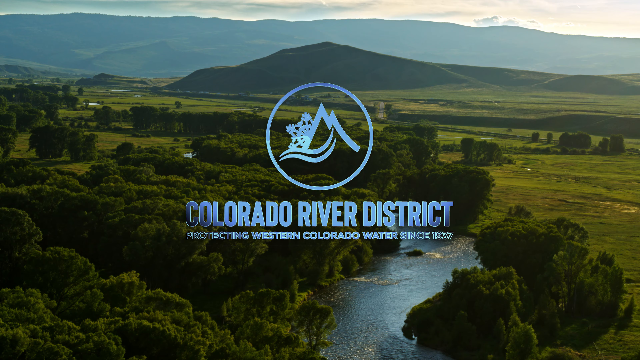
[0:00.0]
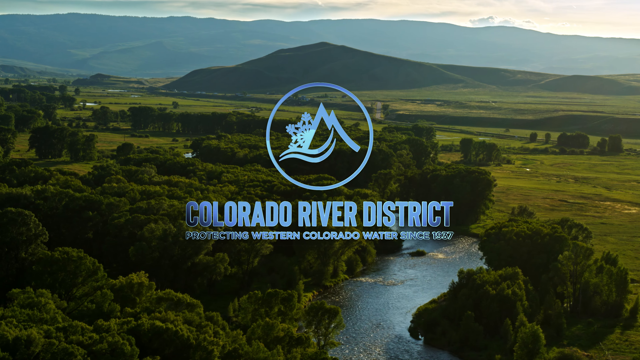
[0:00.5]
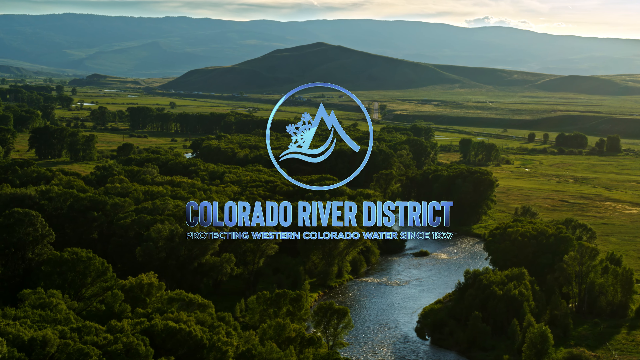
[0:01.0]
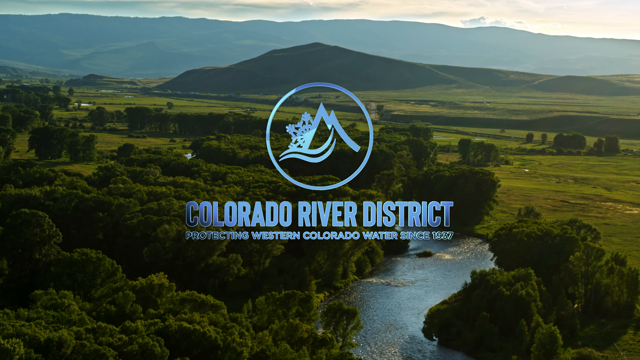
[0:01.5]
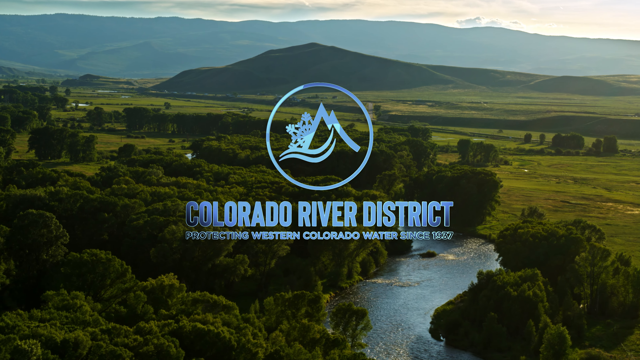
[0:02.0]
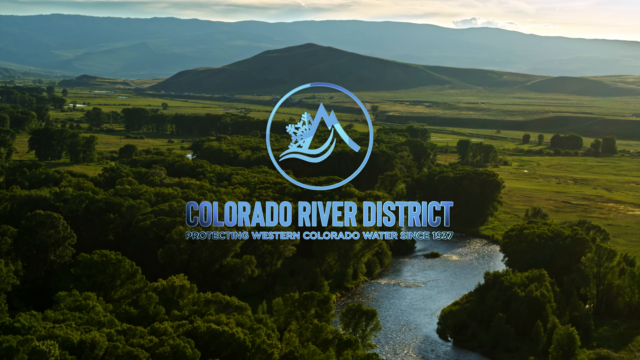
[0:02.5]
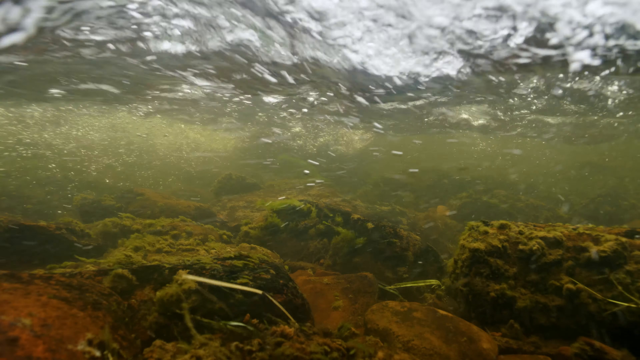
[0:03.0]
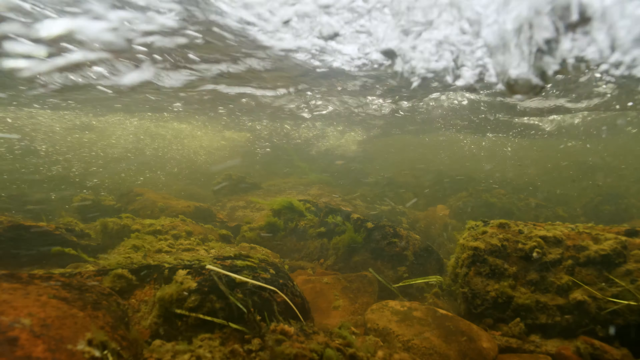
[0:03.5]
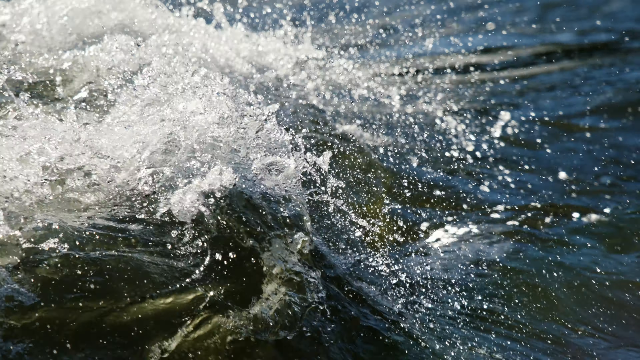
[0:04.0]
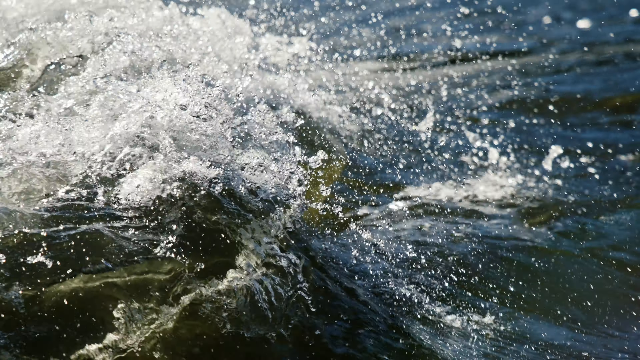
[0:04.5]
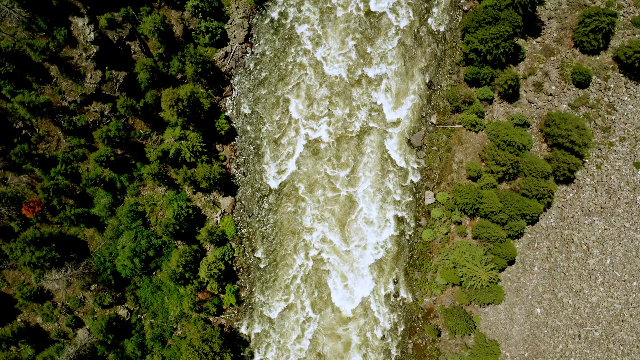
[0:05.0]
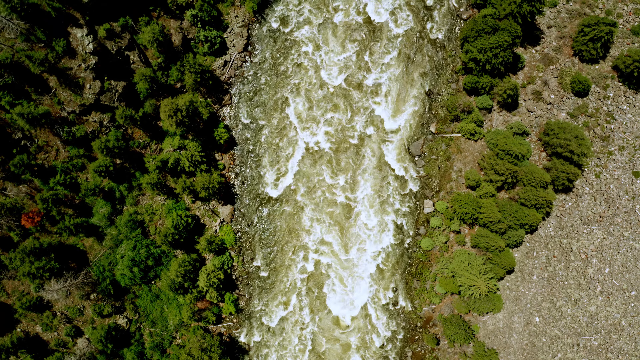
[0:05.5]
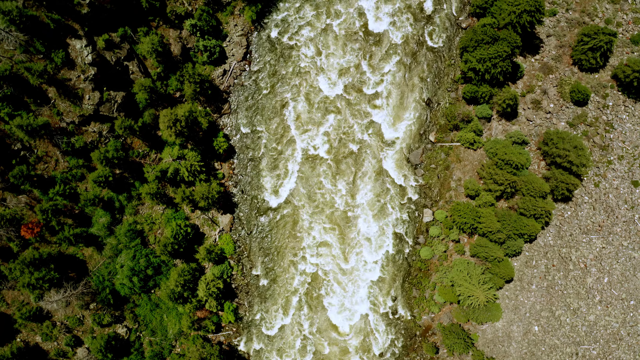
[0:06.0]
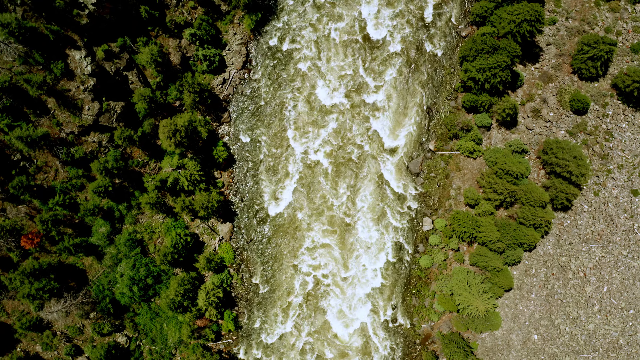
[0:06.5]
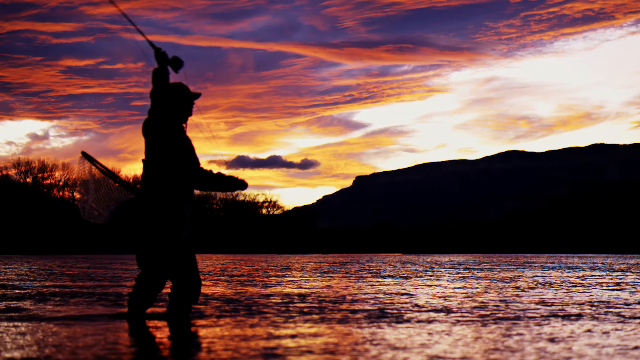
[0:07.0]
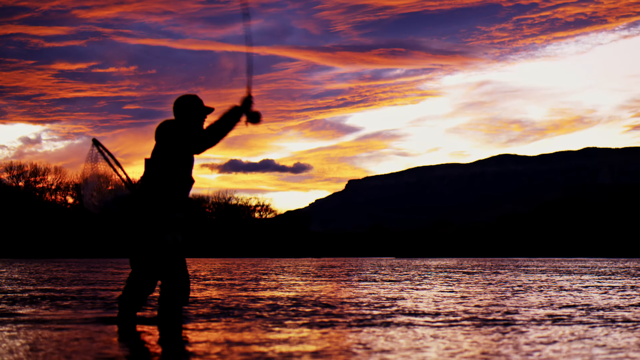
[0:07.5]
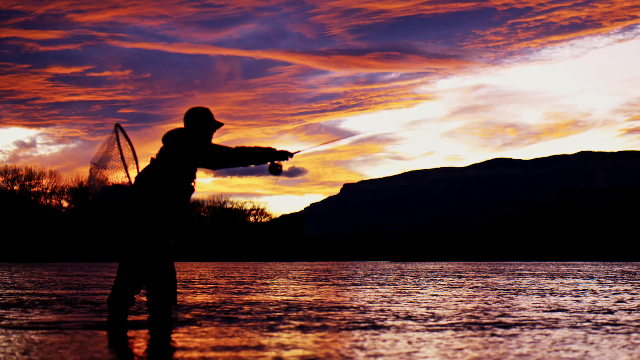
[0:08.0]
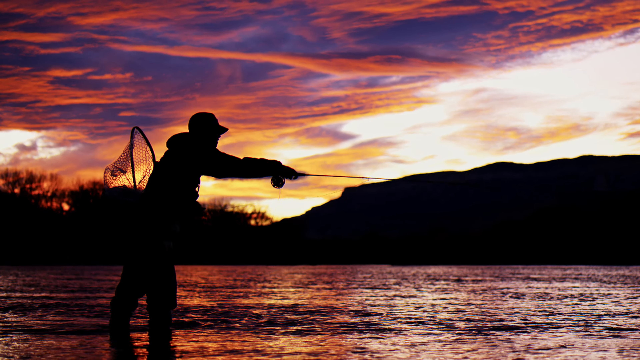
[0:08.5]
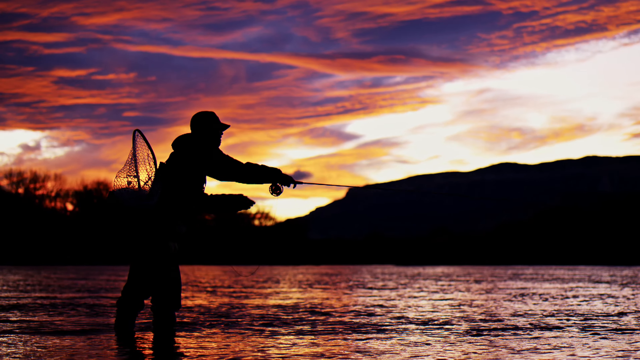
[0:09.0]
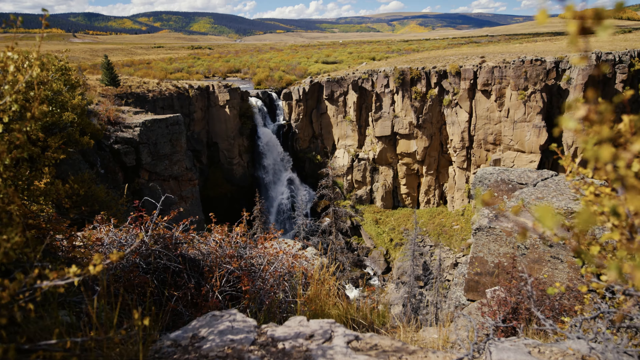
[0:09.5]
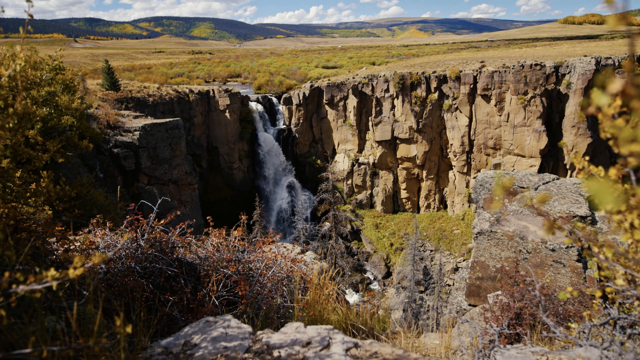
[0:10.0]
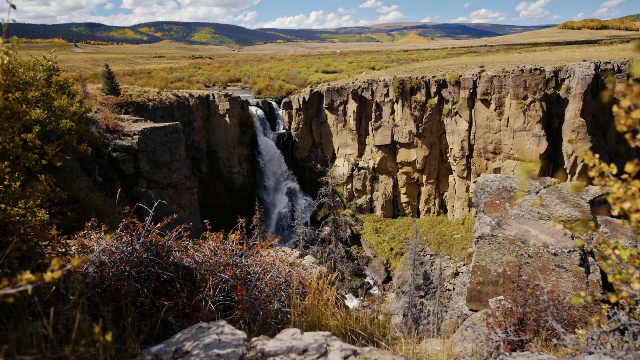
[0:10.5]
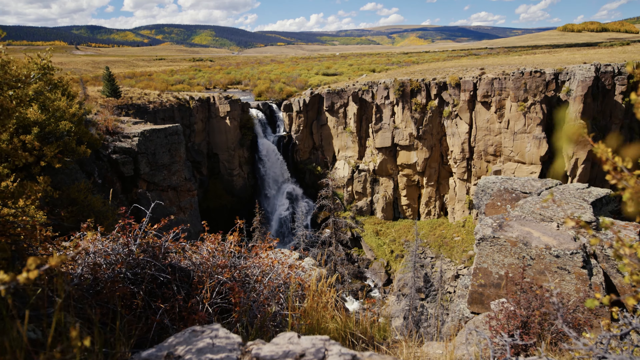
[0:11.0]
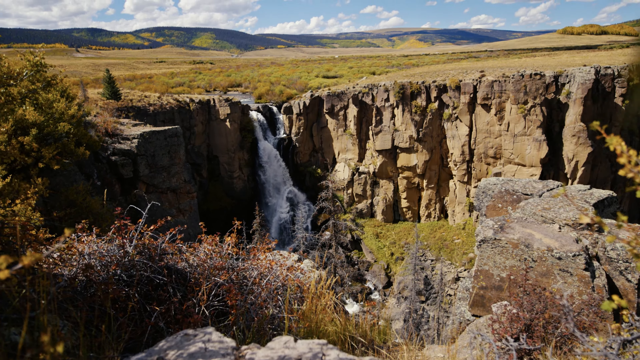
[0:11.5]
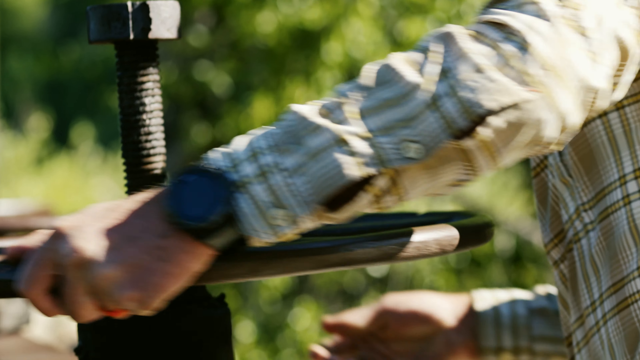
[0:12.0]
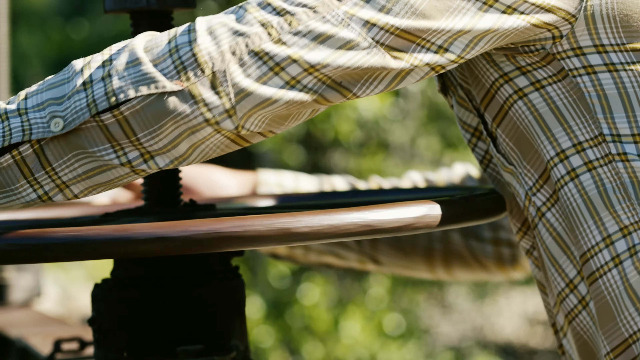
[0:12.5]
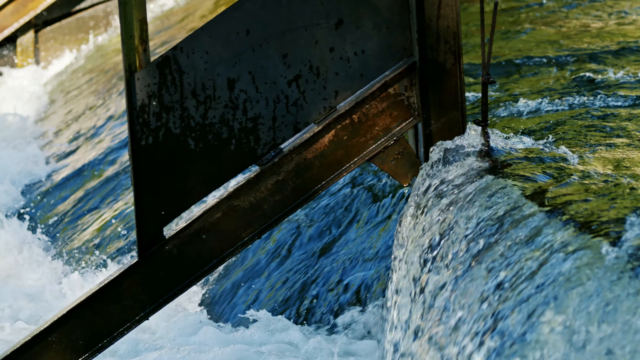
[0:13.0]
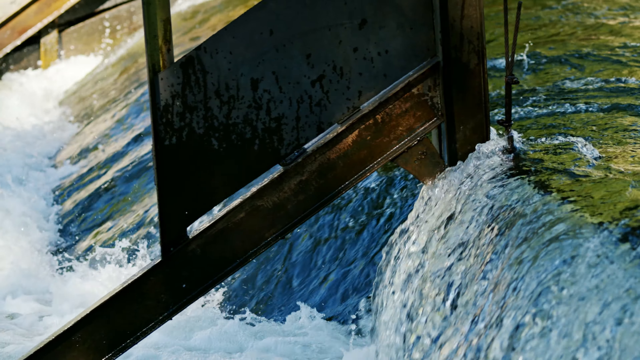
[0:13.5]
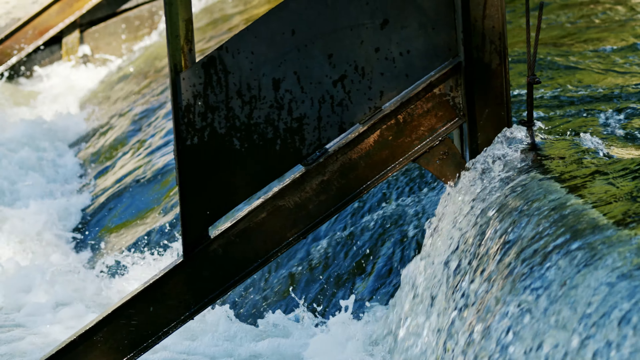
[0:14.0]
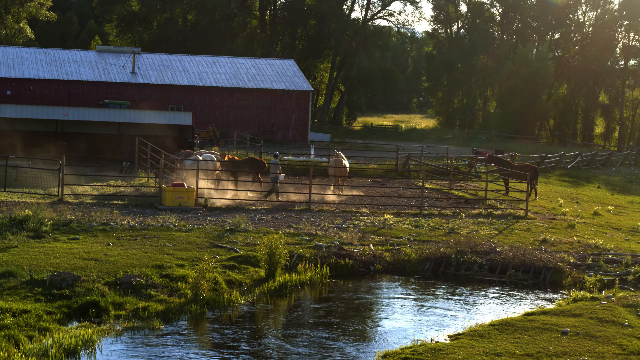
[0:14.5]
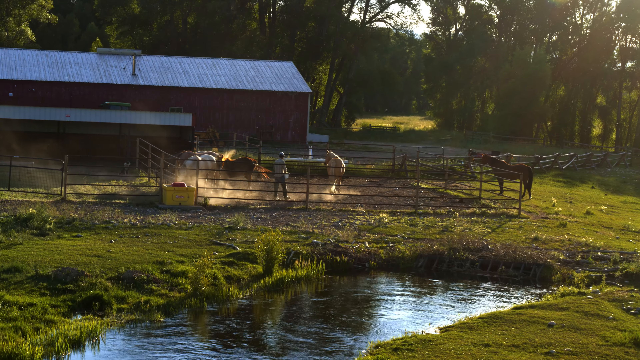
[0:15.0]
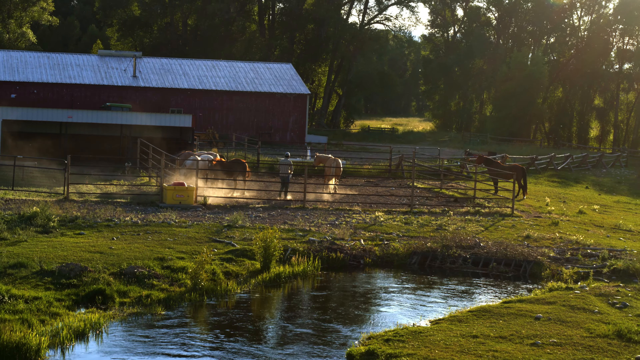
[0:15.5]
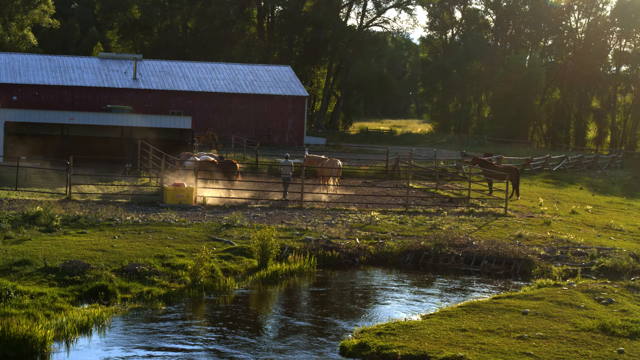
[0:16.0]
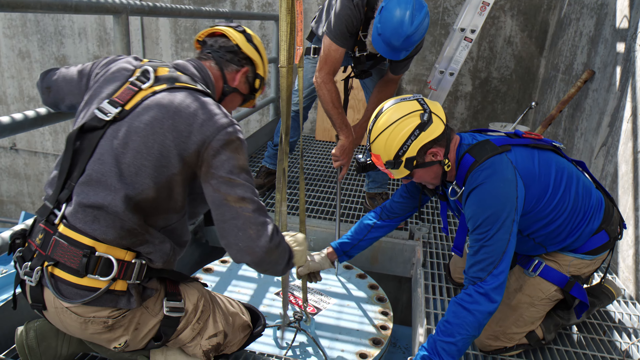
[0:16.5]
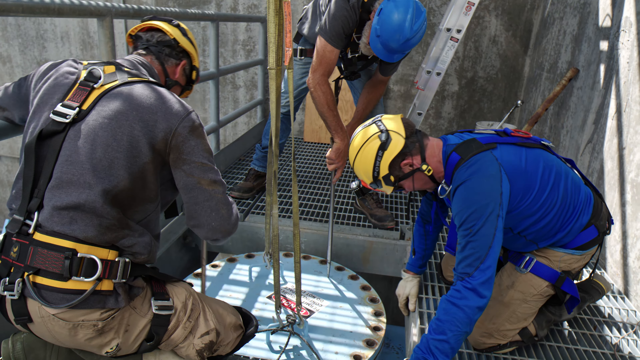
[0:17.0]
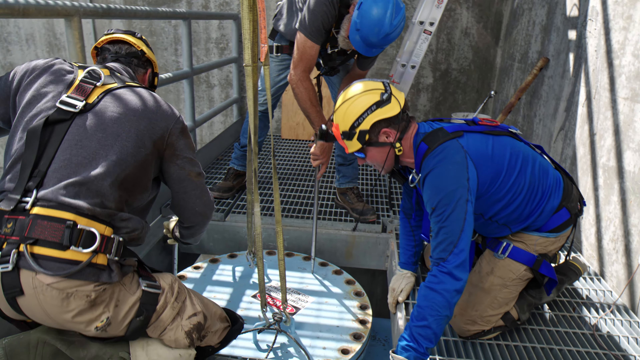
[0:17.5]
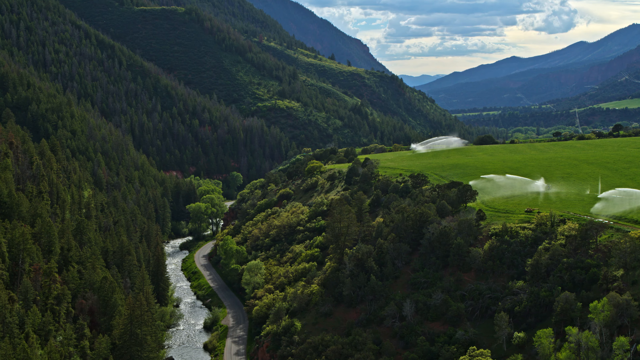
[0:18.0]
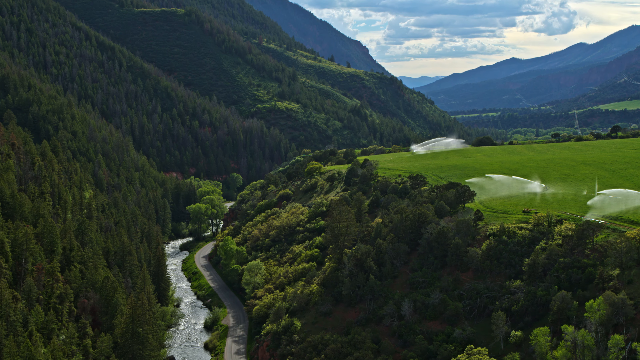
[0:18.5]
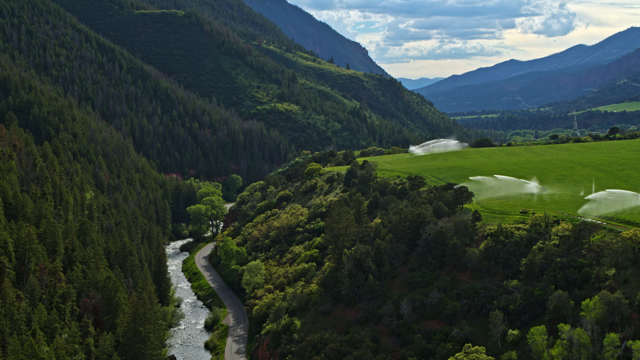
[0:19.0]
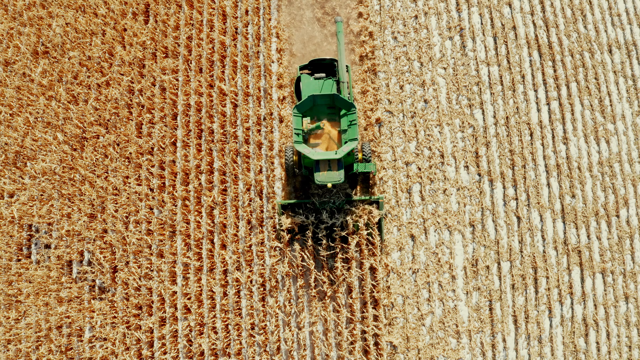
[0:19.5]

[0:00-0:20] Blue metallic text appears over a wide, sprawling, plains-like landscape, with a logo of a mountain and a snowflake. The text reads "Colorado River District protecting Western Colorado water since 1937". A river runs through a green plains or farm landscape with some mountains in the background. The video cuts to a view under the river, underwater, then above it; the river is very shallow, more of a creek or stream, with some ripples and splashes. An overhead view shows a large river with whitewater rapids and trees on either side. A silhouetted fisherman, with hills behind him, fly-fishes at sunset under a very blue and orange sky with a shadowy mountain. Next comes a canyon with a waterfall and big plains above it, with some vegetation in the near view. A man in flannel opens a dam, apparently by turning a wheel, and the shot cuts to the dam itself, an old-ish river dam. There is also a shot of three horses and a pen with a man, followed by a horse outside the pen on a farm. Three workers wearing safety gear work on a metal platform. A farm on a hill, a kind of terrace, has a forest coming down to a two-way road with vegetation in the middle of it; the road appears to be paved, and a big mountain is on the left. An overhead view shows a tractor in a field driving toward the bottom of the frame.